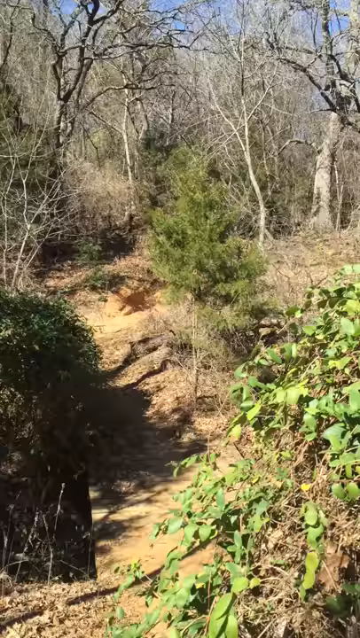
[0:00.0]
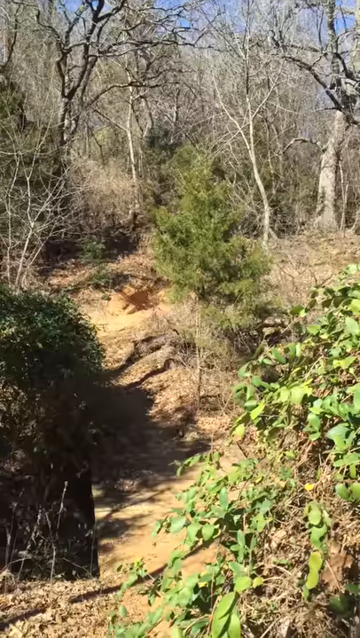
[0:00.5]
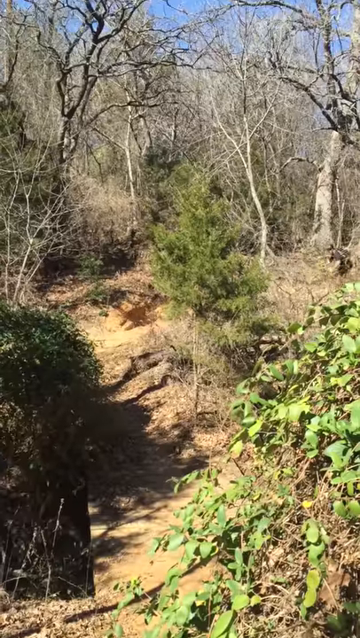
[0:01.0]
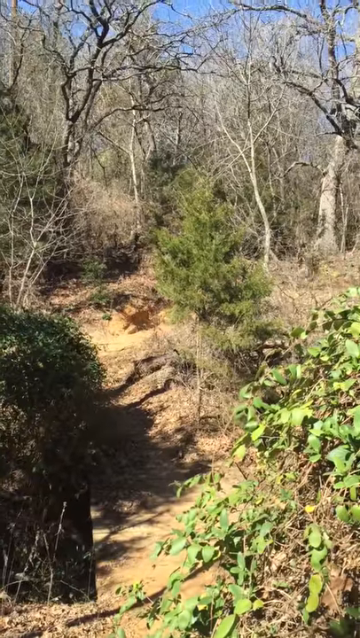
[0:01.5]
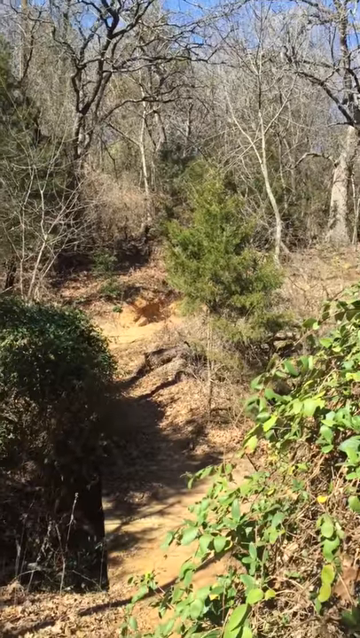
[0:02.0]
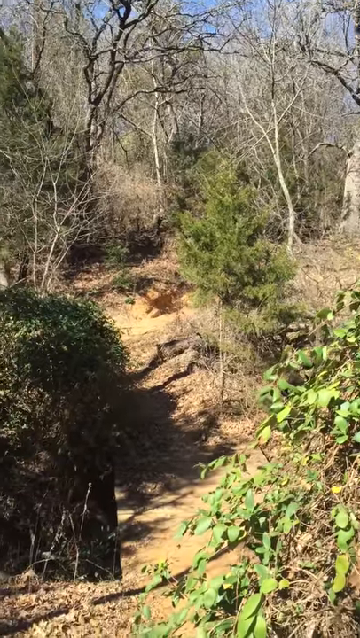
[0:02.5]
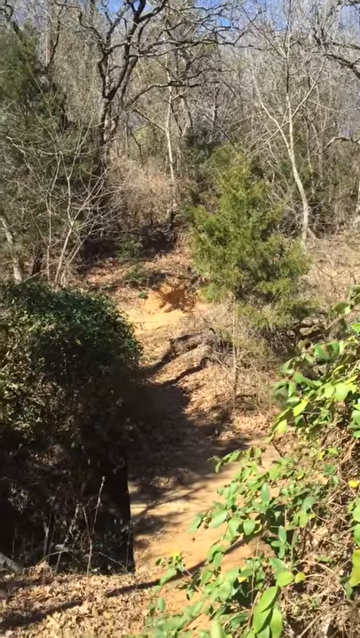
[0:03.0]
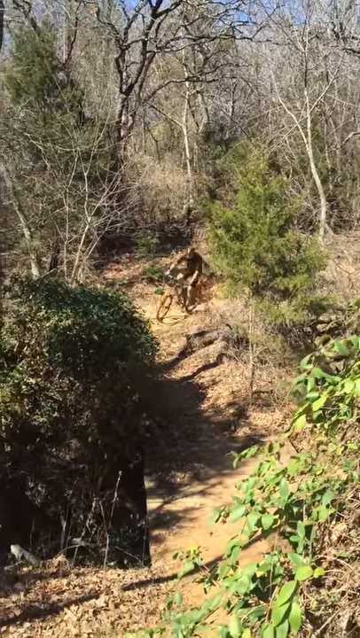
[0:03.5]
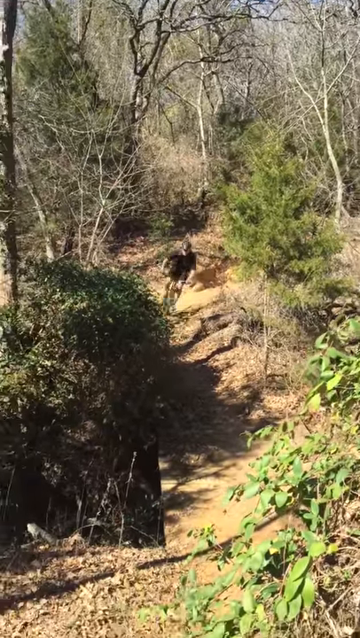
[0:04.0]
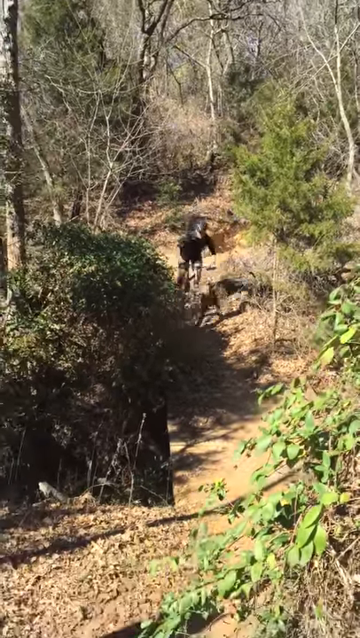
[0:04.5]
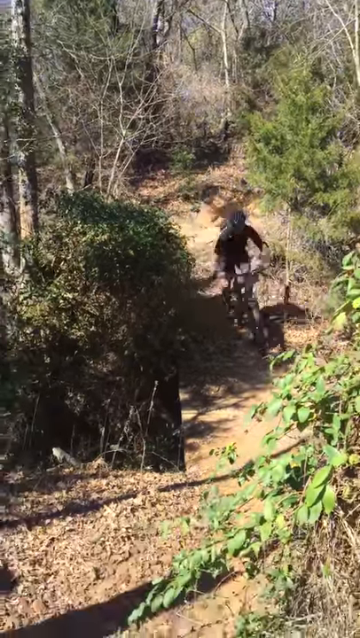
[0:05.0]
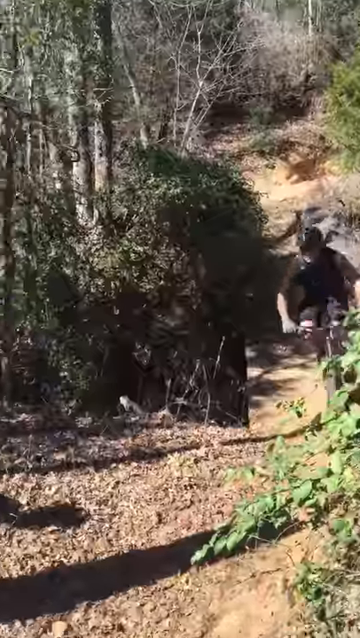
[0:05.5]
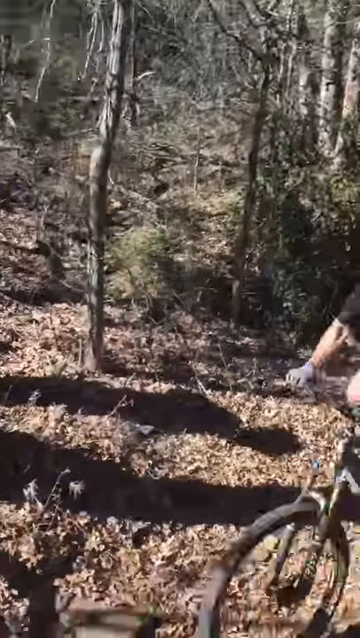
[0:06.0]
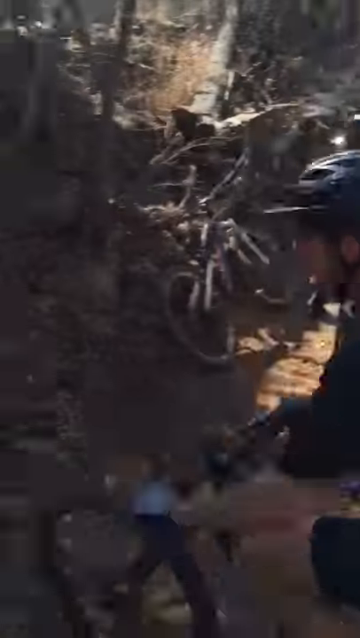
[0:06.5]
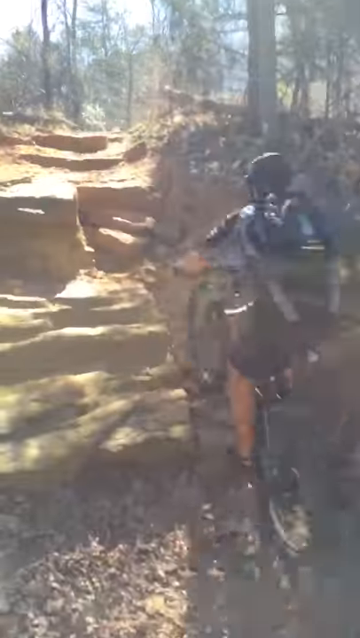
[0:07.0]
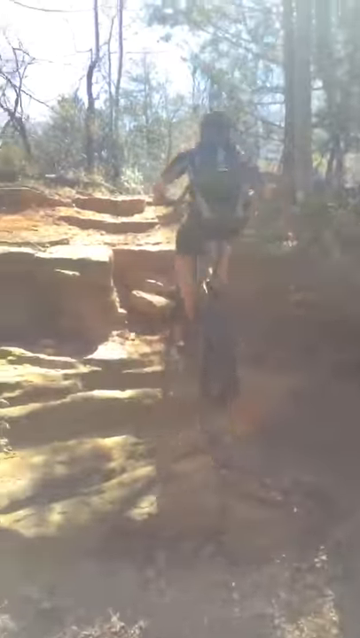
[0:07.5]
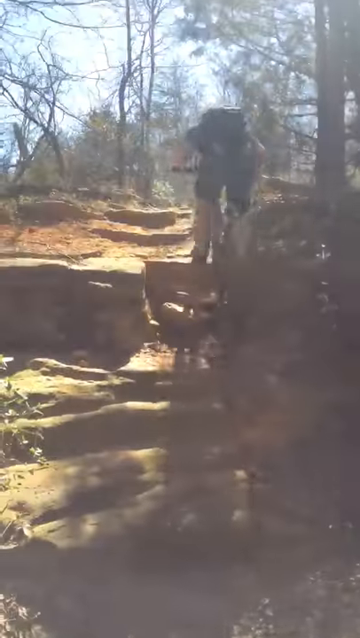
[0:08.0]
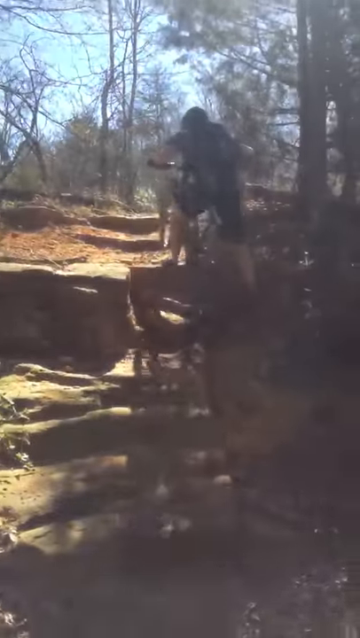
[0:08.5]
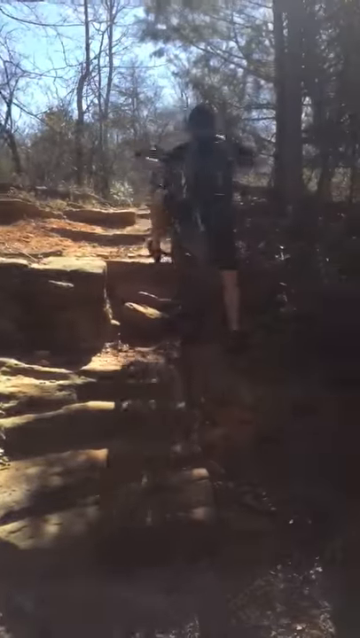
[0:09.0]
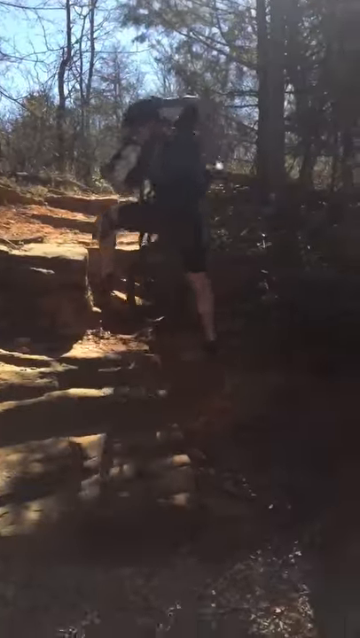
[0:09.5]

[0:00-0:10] Someone is mountain biking in a rugged wilderness area. There is not much of a trail, just a somewhat clearer spot among a bunch of trees and bushes. It looks like a sunny day, with shadows from the foliage on the ground, and the sun seems to be at an angle rather than directly overhead. A person in dark clothes, shorts, an elbow-length shirt and a helmet rides down the trail toward the camera, bumping along, and the camera adjusts to follow him as he pedals up a very rocky path. He loses his balance, starts to dismount and starts to fall to the left, but the shot ends before he hits the ground. Up close, he wears fingerless gloves, shorts and shoes with no visible socks. He might be carrying a backpack, perhaps a hydration backpack, and he is riding a mountain bike, not a normal 10-speed.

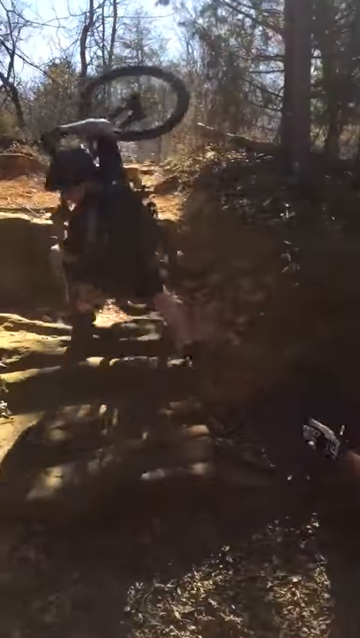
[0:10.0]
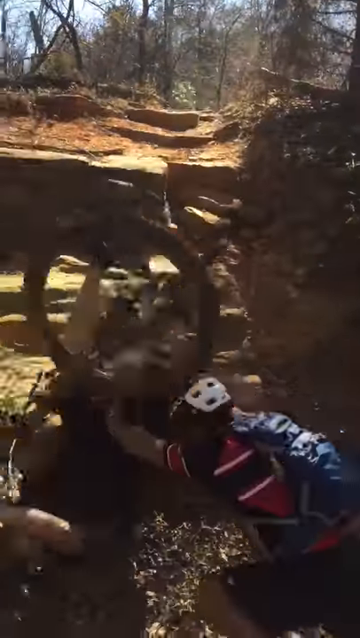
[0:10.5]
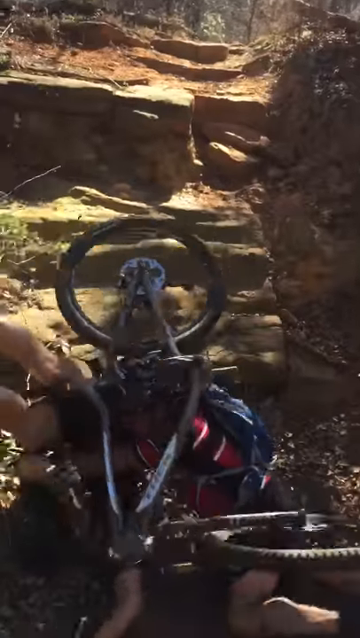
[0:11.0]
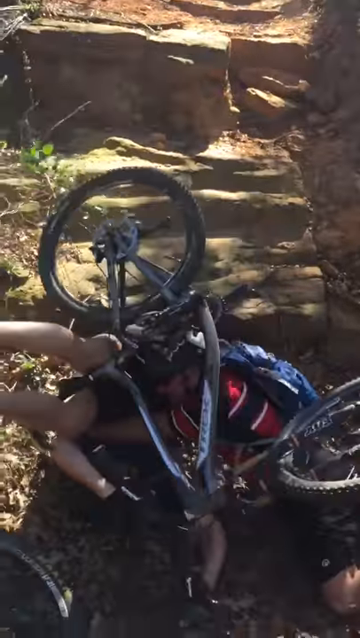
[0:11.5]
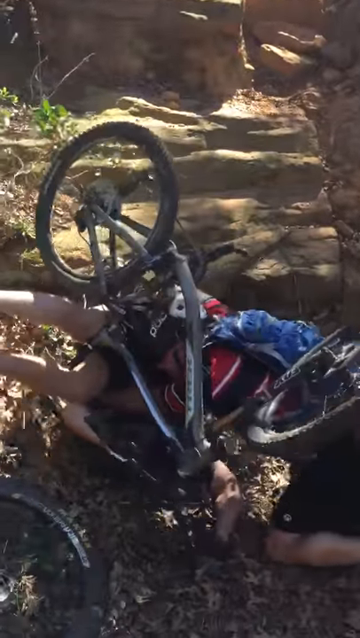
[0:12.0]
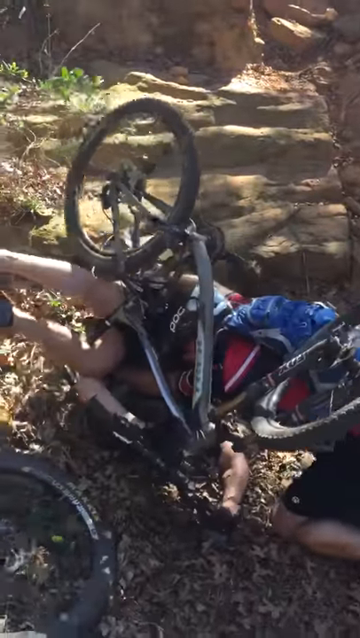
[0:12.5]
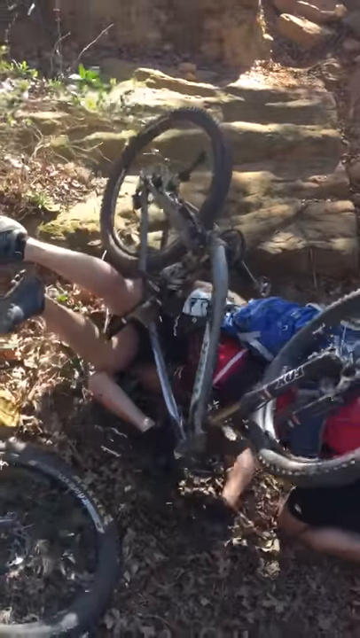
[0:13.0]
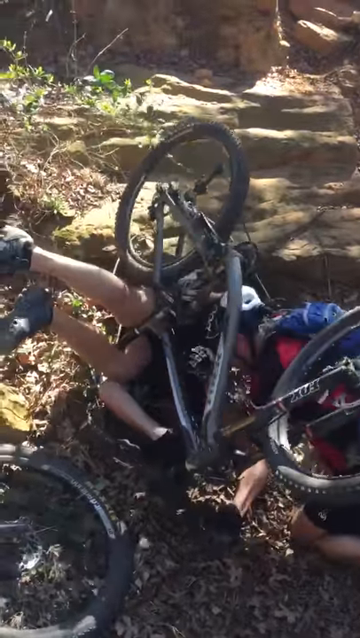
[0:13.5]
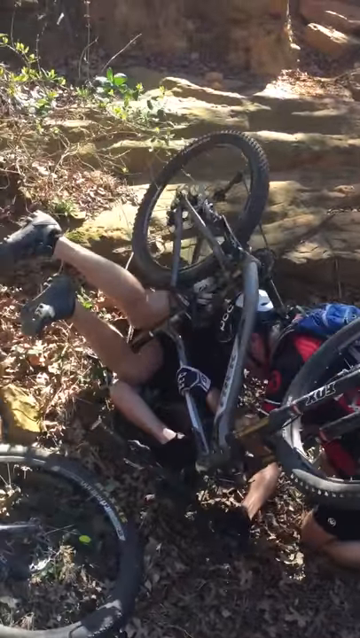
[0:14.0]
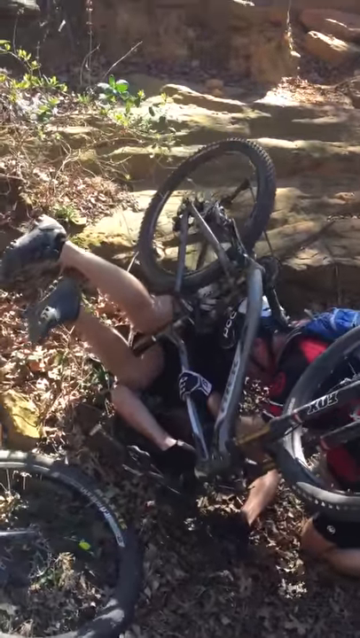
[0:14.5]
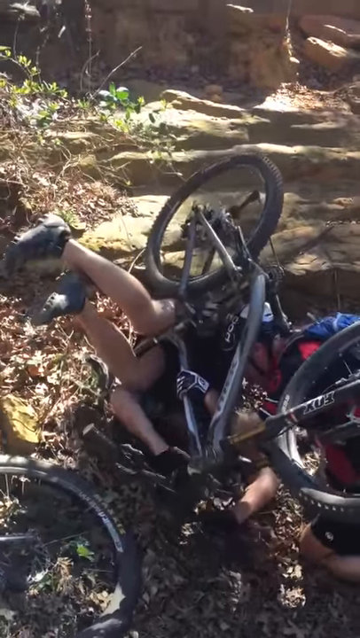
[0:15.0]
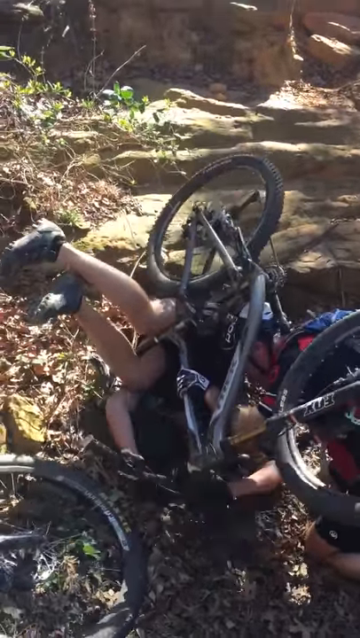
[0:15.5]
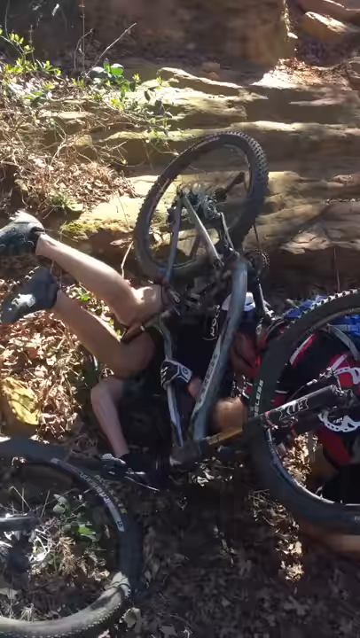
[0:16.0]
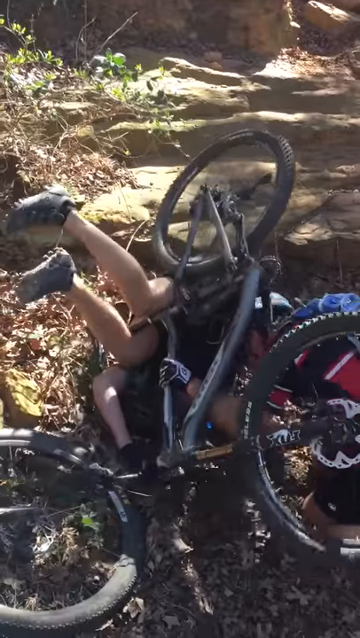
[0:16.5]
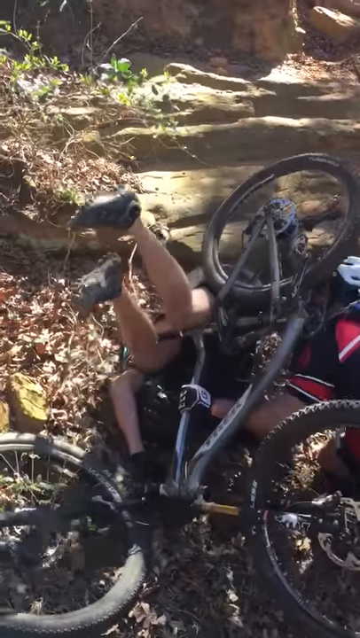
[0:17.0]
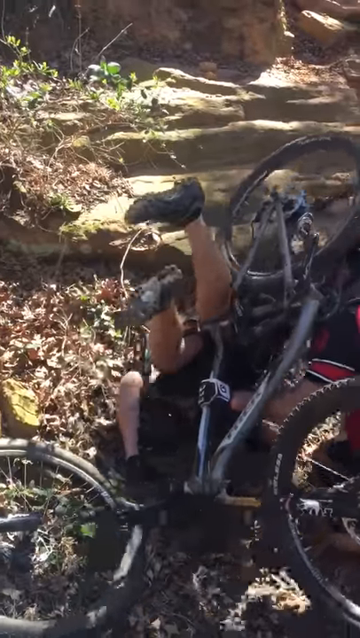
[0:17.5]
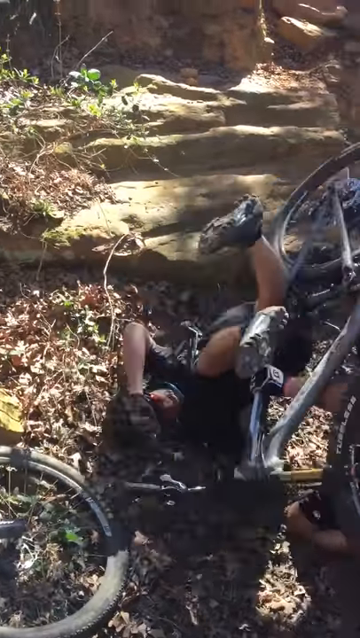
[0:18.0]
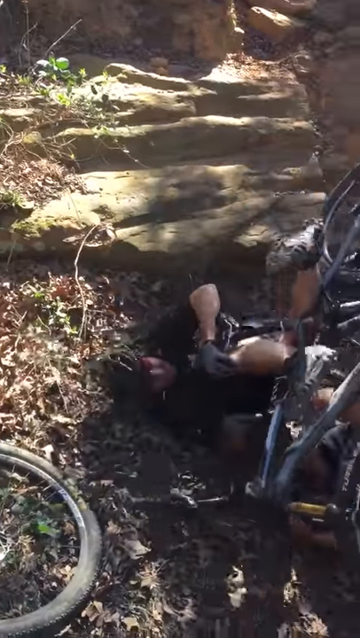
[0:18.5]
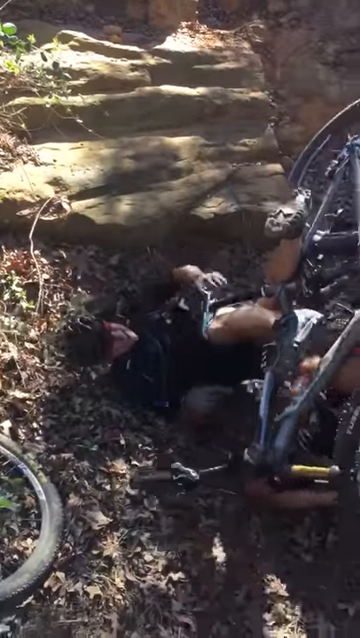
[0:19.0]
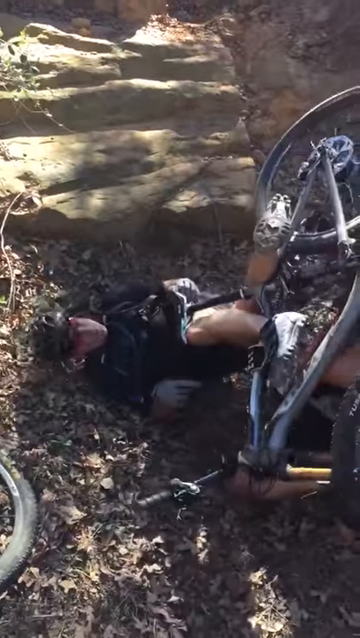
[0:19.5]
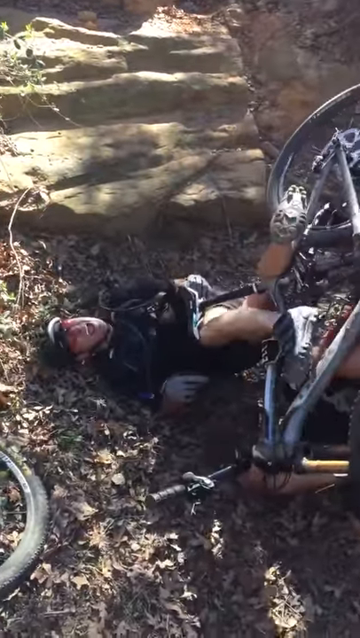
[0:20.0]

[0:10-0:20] The rider is on a very rough trail with a lot of rocks and uneven texture. Apparently a man, he falls backwards and to the left so that his bike ends up on top of his body with his legs in the air, and he looks like he is in pain. Someone dashes in from the right side of the camera and grabs the bike to try to save him at the last moment, catching his body to keep him from falling further back down the hill; it is unclear whether this actually helps. The person who jumps in also wears a helmet and is dressed like a competitor, in shorts, a short-sleeved shirt and what looks like a hydration backpack. The fallen rider is in a very uncomfortable-looking position; no blood or anything twisted out of place is visible. The camera focuses in on a bike tire near where his head hit, which possibly belongs to the rider who jumped in to help.